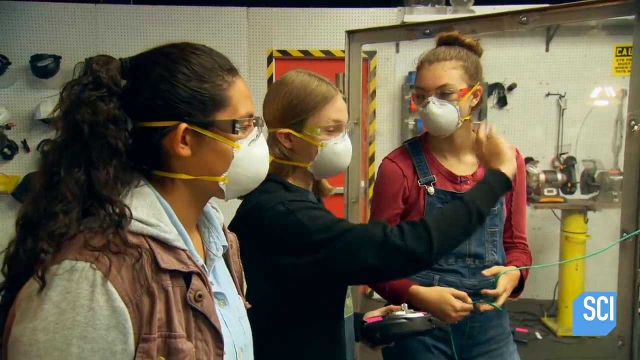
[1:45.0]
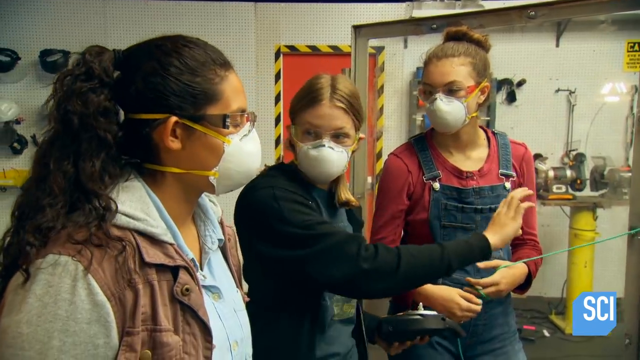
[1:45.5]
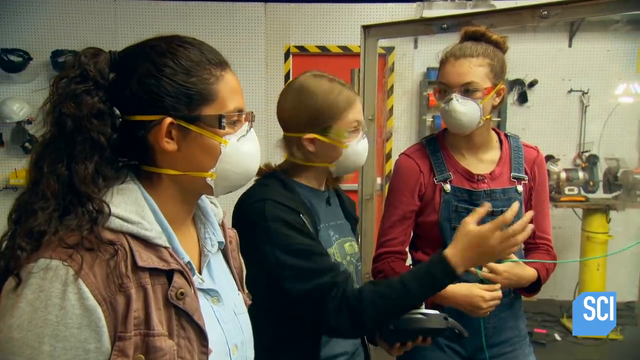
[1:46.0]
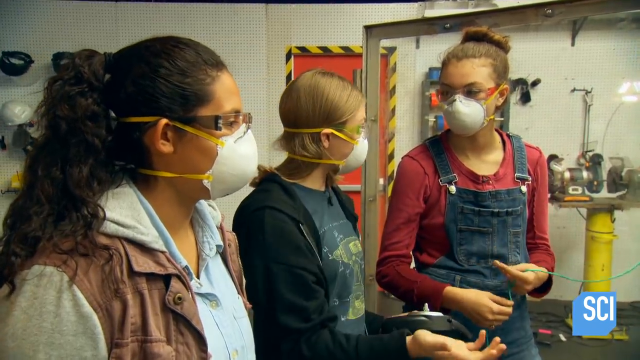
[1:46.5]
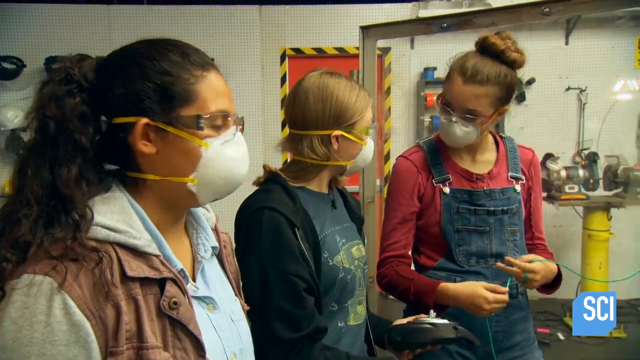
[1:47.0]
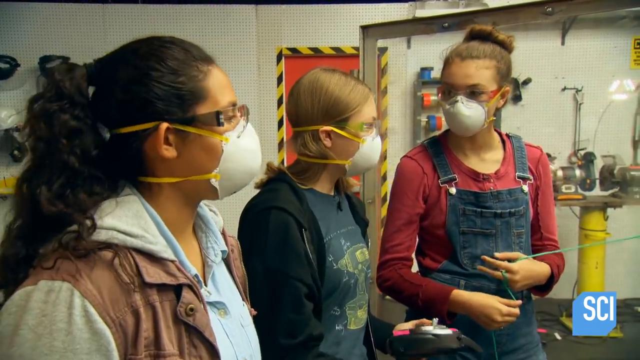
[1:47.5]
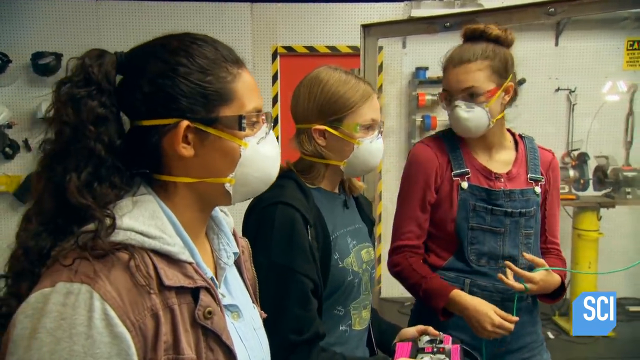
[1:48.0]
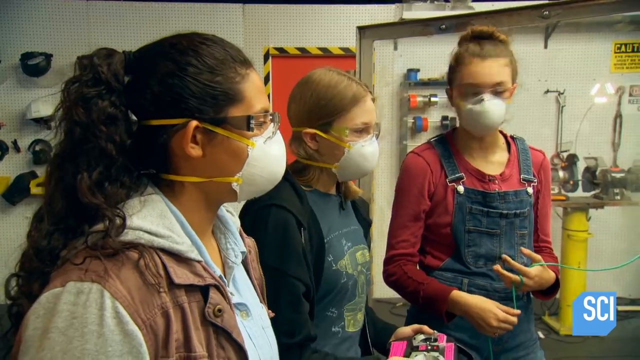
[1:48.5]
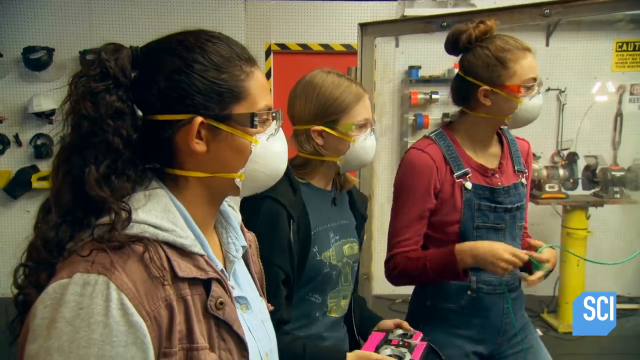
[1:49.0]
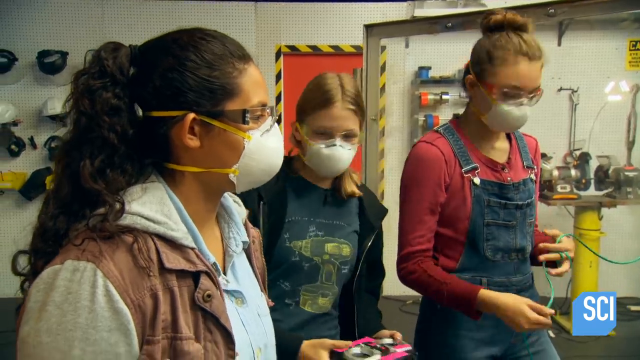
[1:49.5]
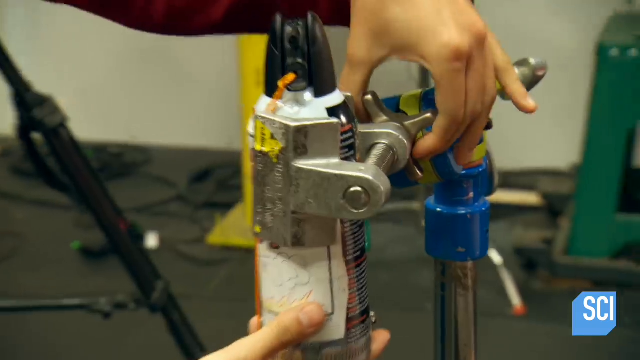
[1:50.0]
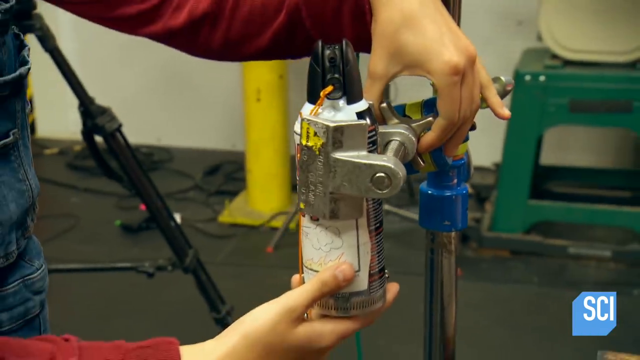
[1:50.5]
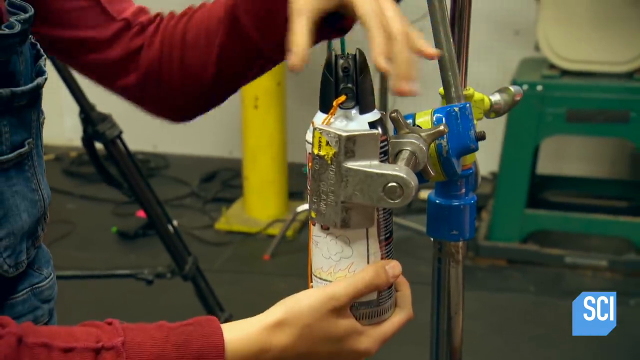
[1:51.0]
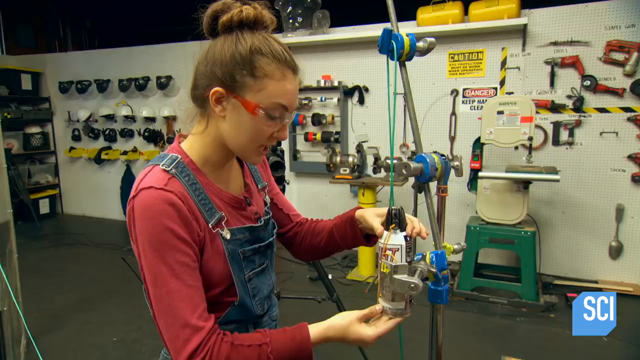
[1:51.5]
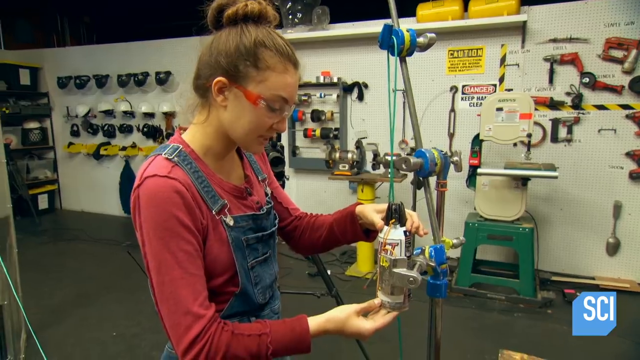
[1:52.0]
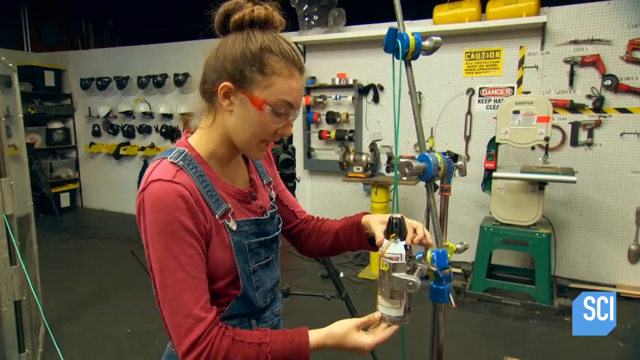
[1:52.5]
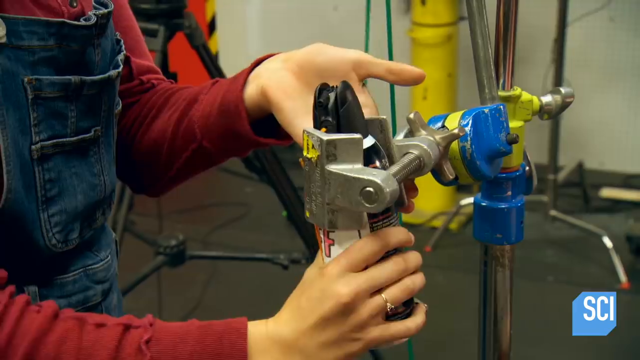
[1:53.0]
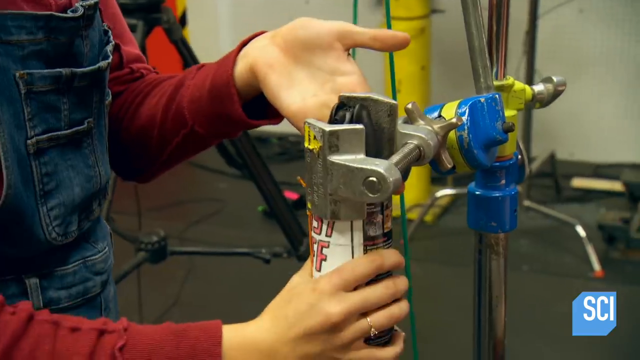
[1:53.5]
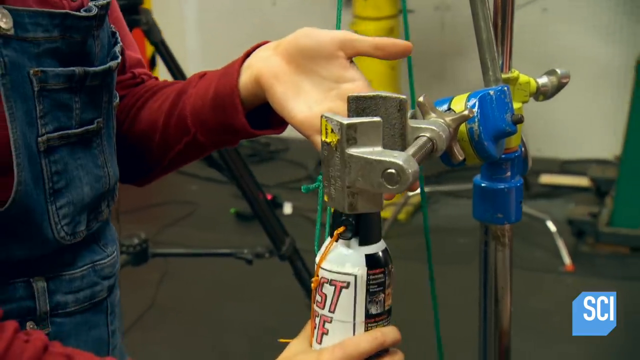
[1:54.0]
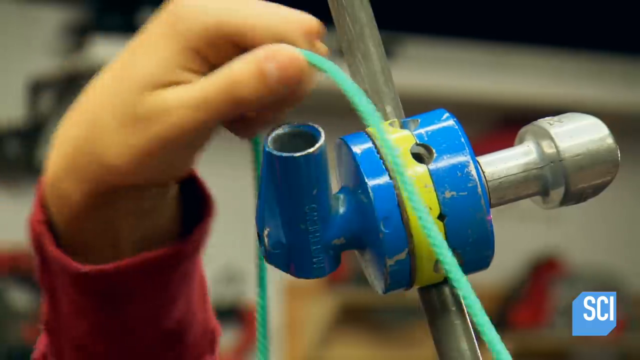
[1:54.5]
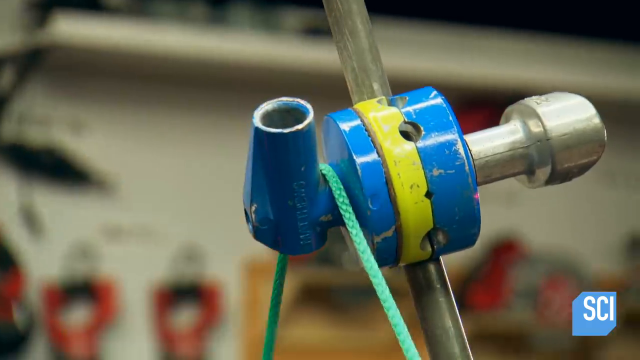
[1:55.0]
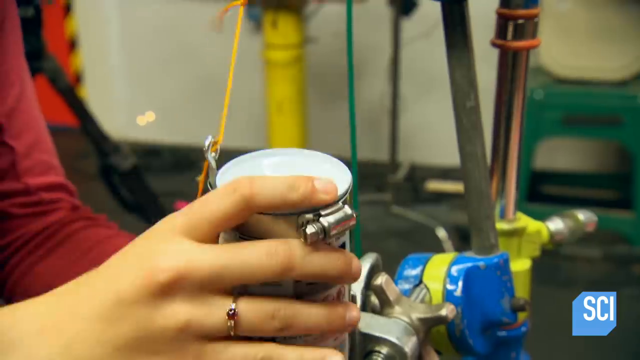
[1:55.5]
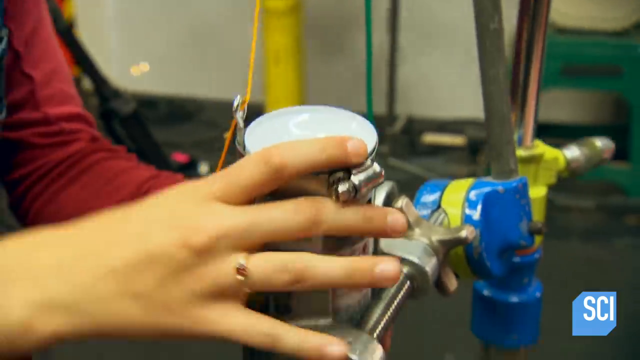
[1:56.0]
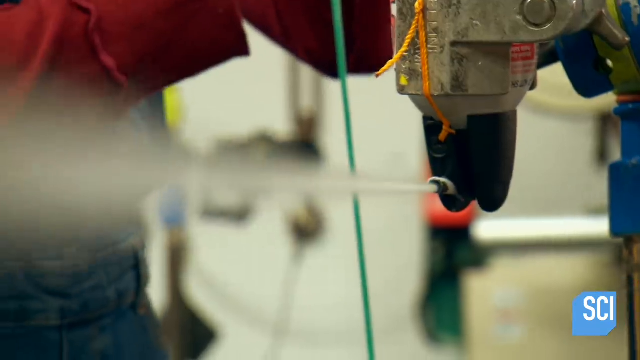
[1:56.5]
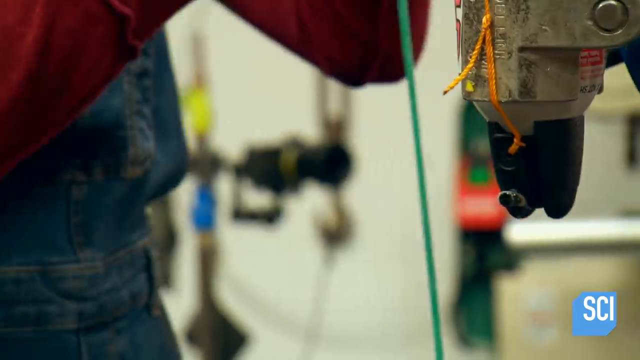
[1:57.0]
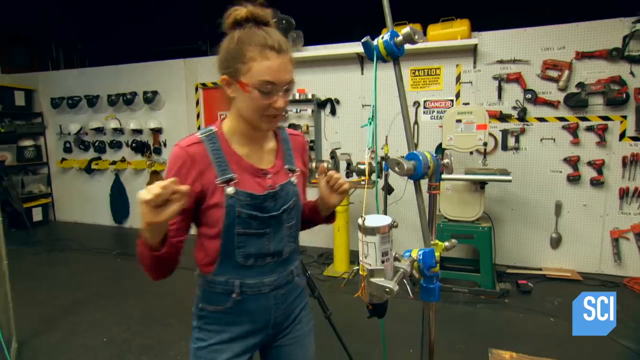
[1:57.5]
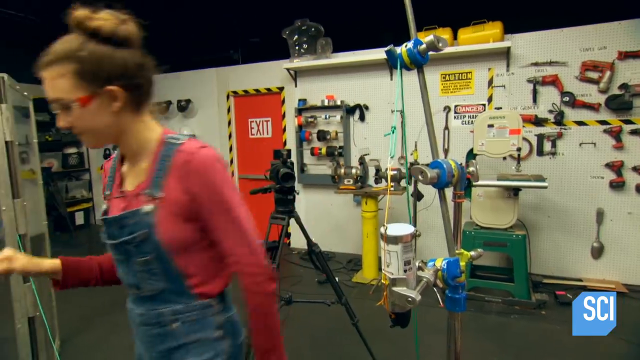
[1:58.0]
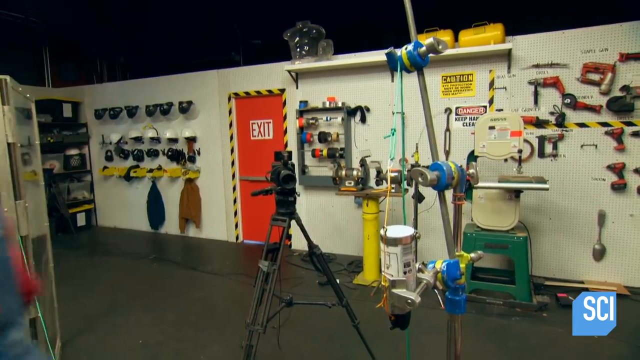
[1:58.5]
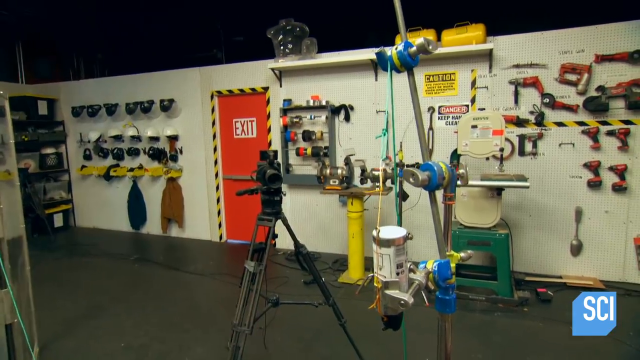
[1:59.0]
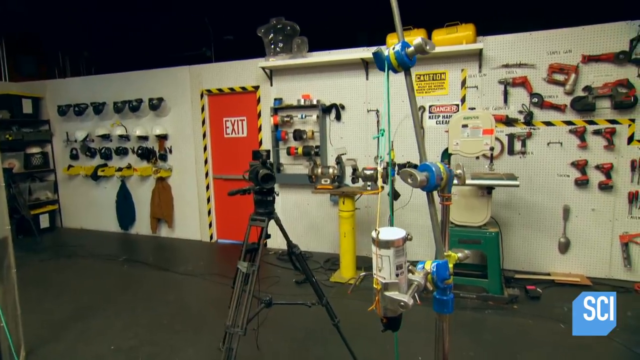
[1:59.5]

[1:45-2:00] Three teenage girls set up an experiment in a workroom, where a Bust-Off spray bottle is turned upside down with a lever to turn it on and a green string attached to it to make it spray. A glass divider is there for safety. Behind it, all three girls are dressed in safety gear: goggles to protect their eyes and masks so they do not inhale spray, with their hair tied back, long-sleeve shirts or jackets, pants and closed-toe shoes. They all make sure they are behind the protective glass before the experiment starts.